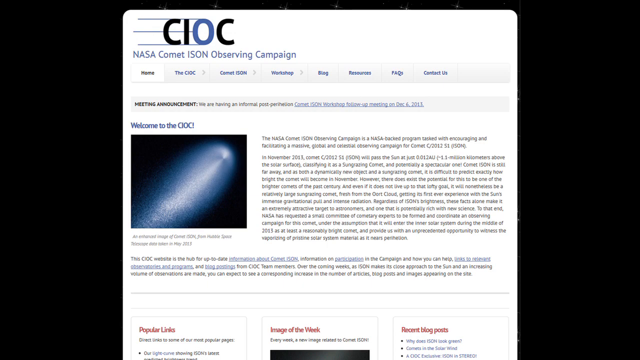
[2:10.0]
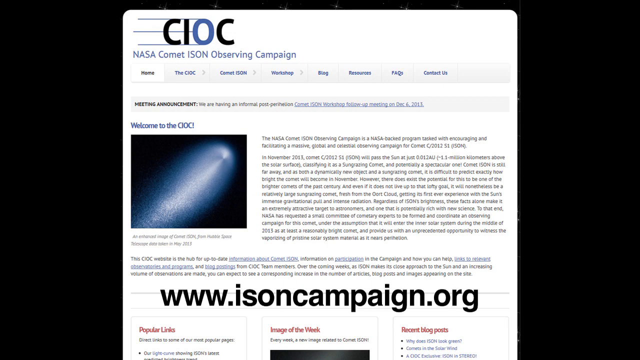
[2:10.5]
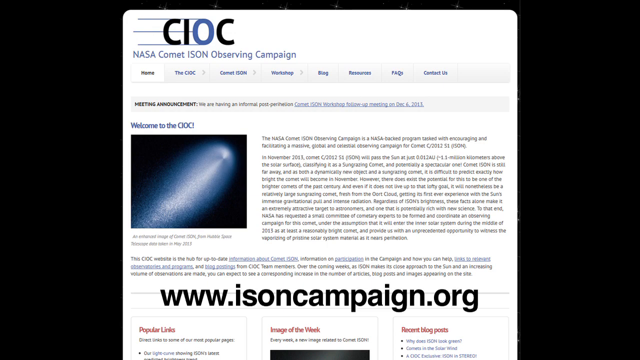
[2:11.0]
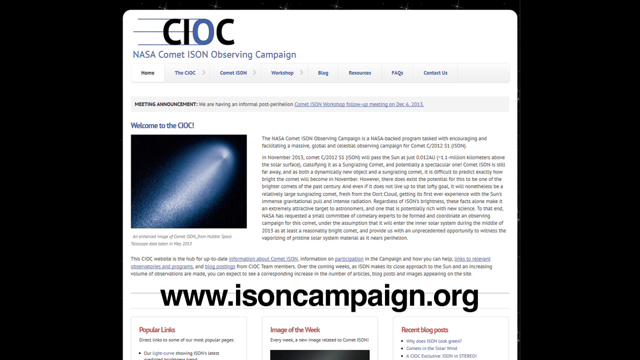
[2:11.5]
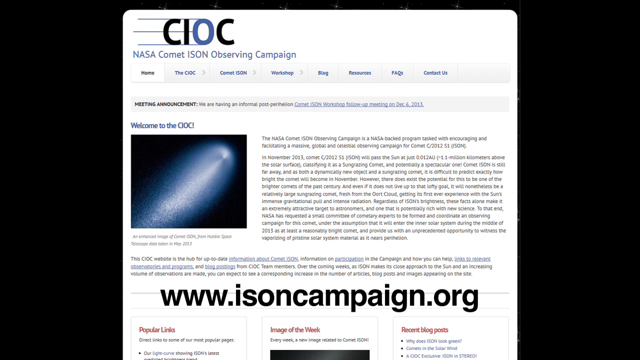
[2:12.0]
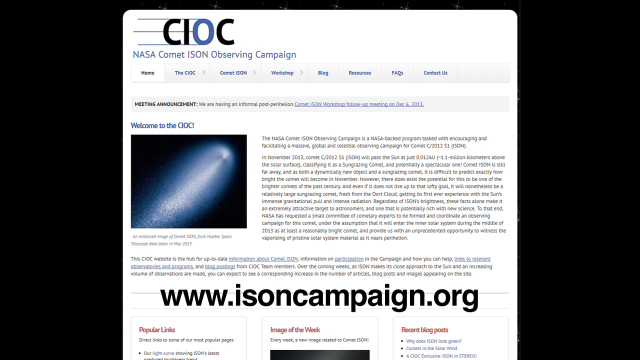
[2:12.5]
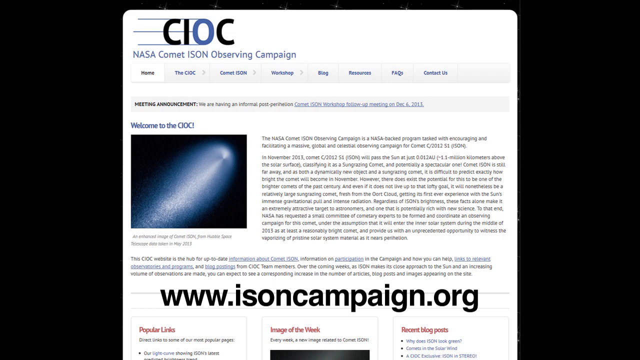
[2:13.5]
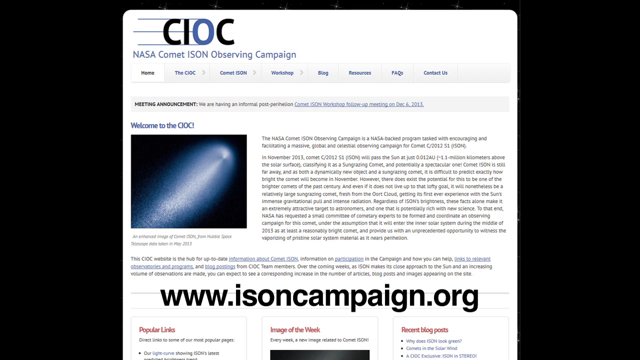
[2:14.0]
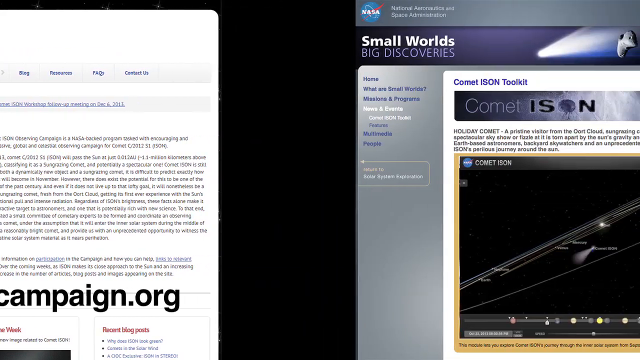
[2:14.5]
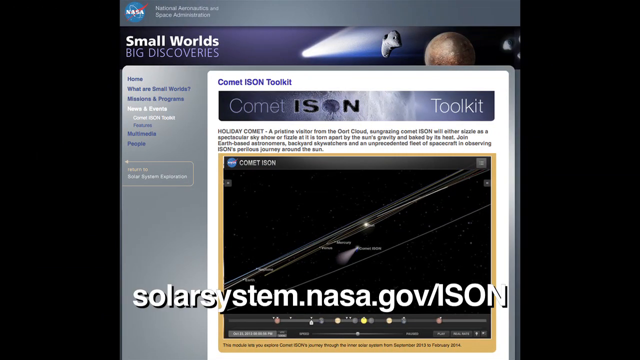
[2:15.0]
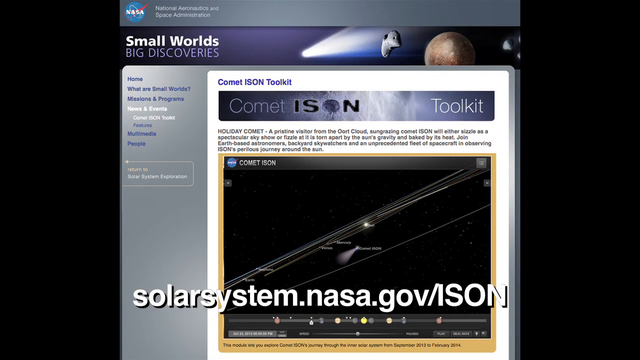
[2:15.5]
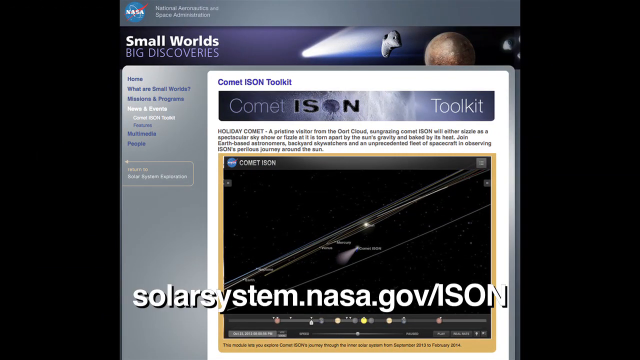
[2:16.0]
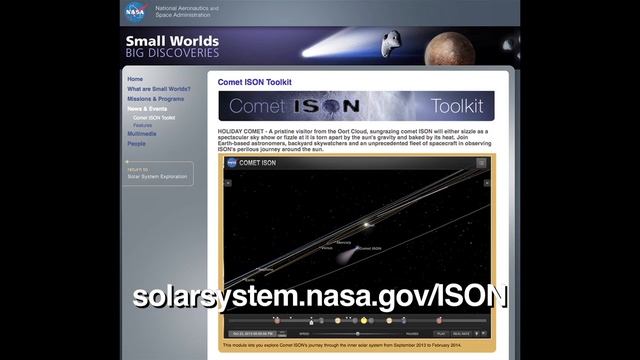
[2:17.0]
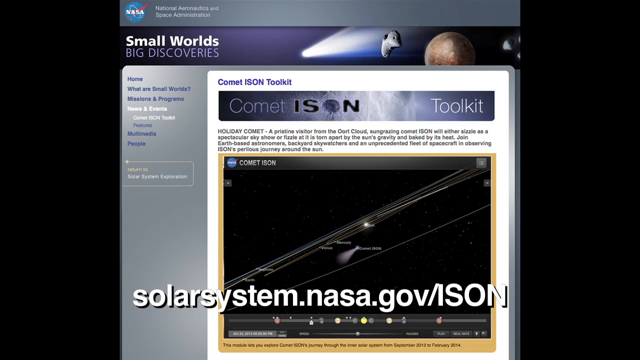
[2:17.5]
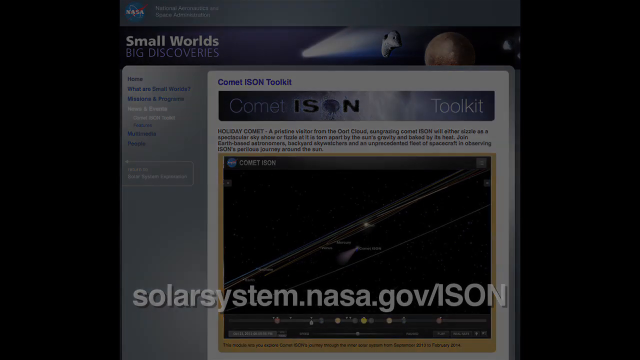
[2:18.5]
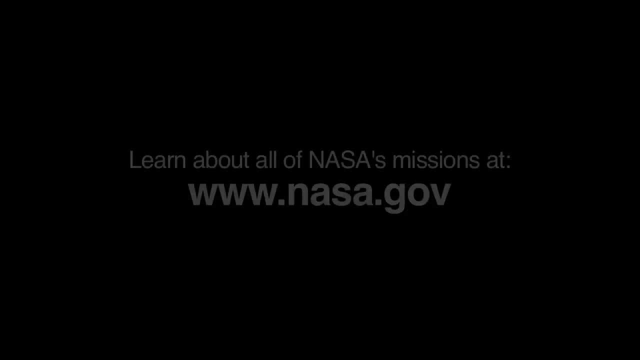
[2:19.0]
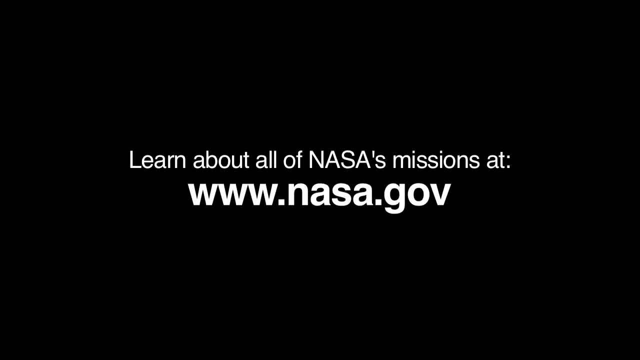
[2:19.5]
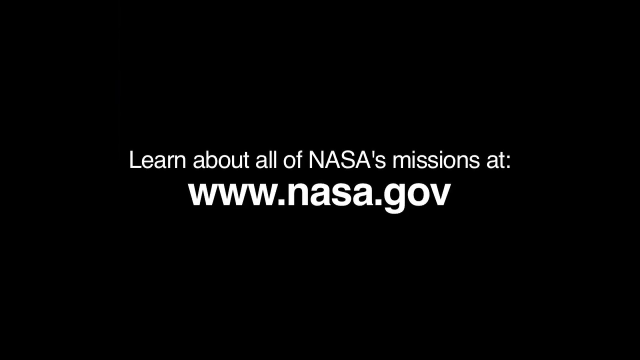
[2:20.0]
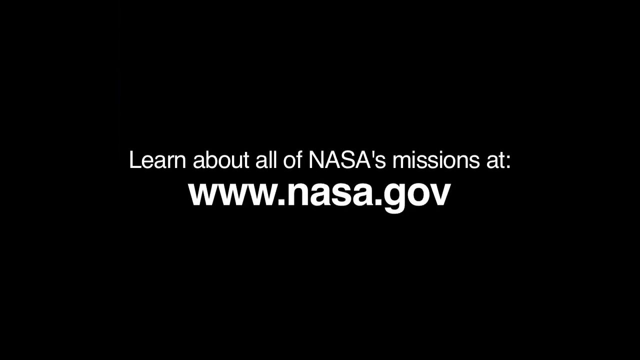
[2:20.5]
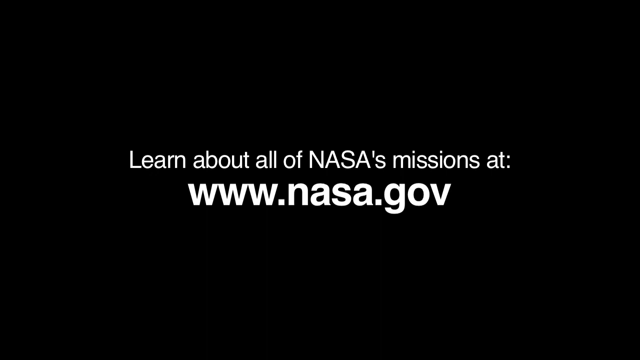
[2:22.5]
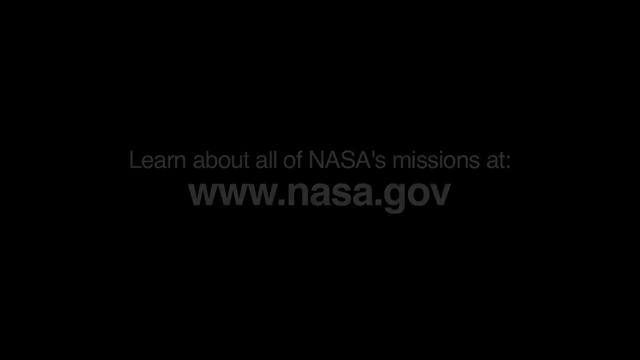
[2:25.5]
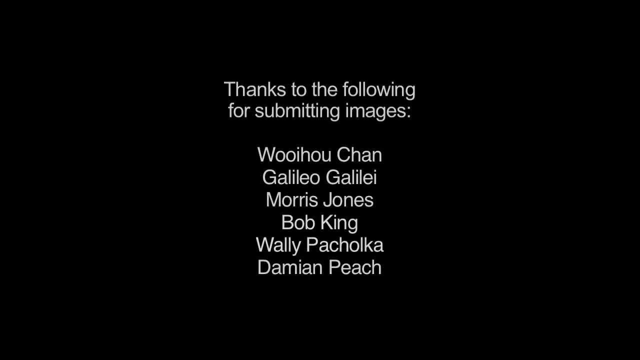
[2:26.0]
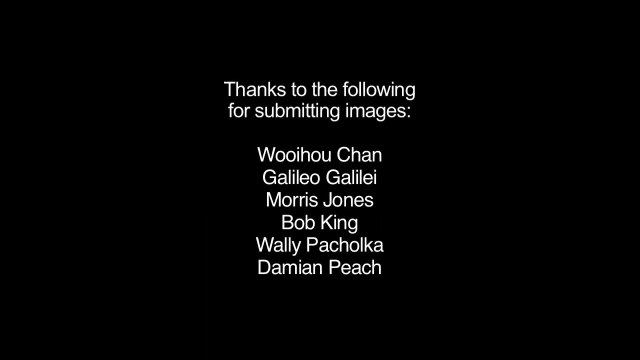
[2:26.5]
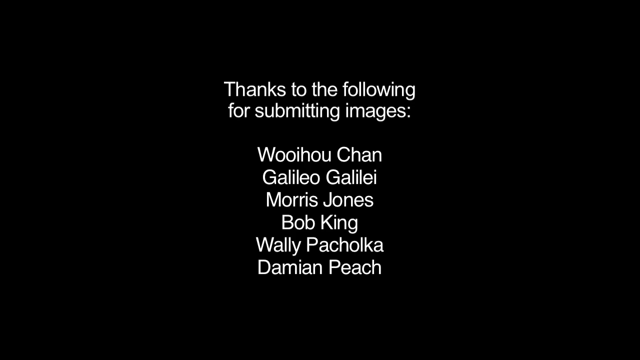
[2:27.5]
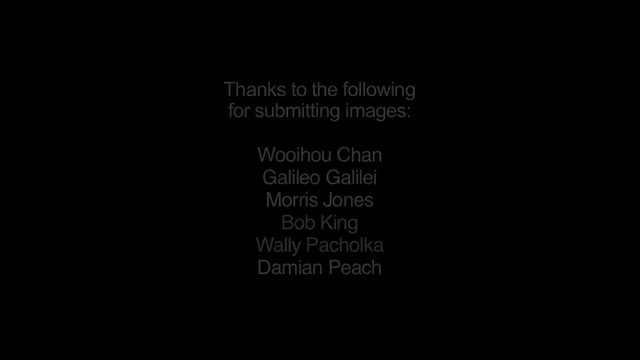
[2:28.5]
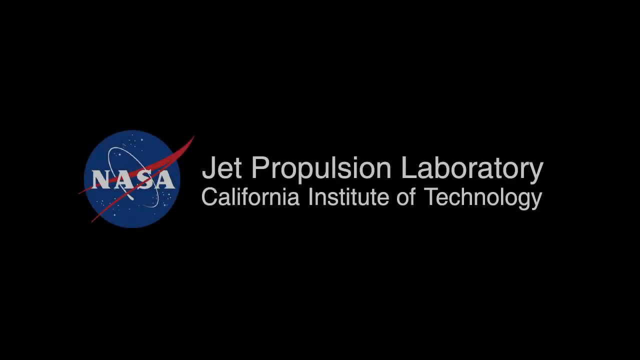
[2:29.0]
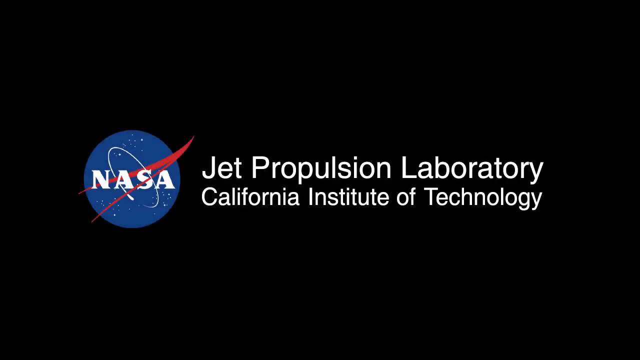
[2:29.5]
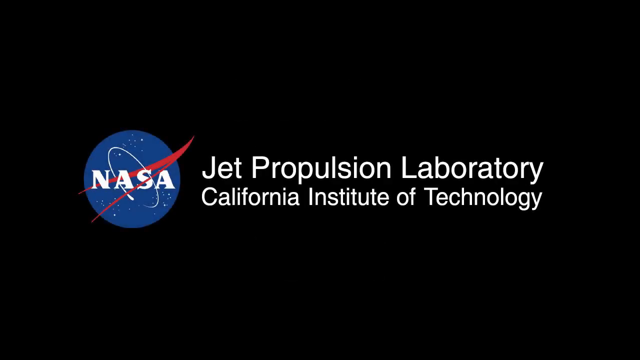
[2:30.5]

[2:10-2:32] The NASA comet ISON observing campaign is shown with an explanation of the campaign and its different websites, including "Small worlds" and "Learn all about NASA's mission at www.nasa.com." Icons and comets in the sky from the observation are shown. The websites www.isoncampaign.org and solarsystem.nasa.gov/ISON appear. The video thanks the individuals who submitted images and lists names of contributors. Jet Propulsion Laboratory, California Institute of Technology is shown, along with the NASA icon: a blue Earth shape with a white circle, apparently stars in the middle, the NASA logo in all white, and a red strip between the NASA logo and the Earth symbol.